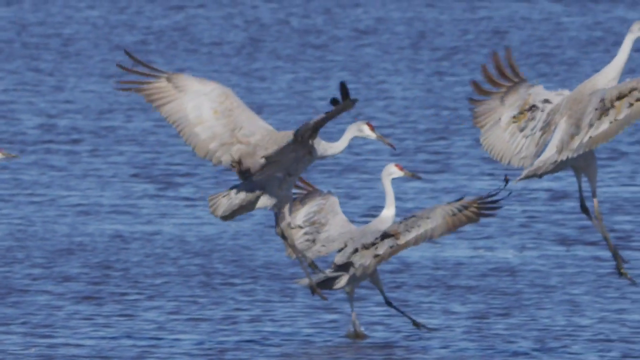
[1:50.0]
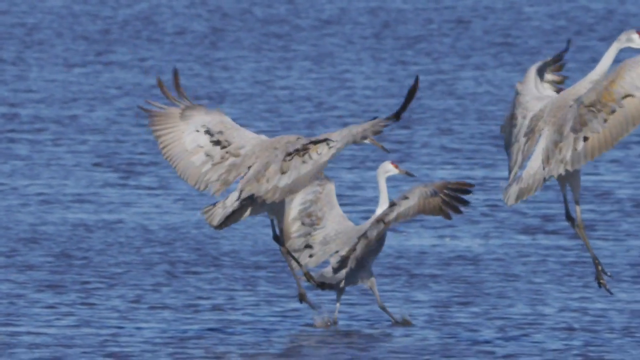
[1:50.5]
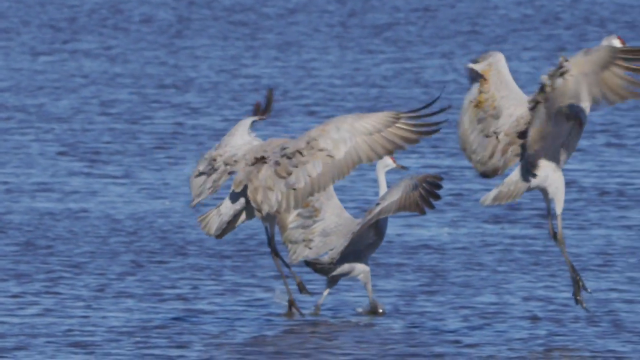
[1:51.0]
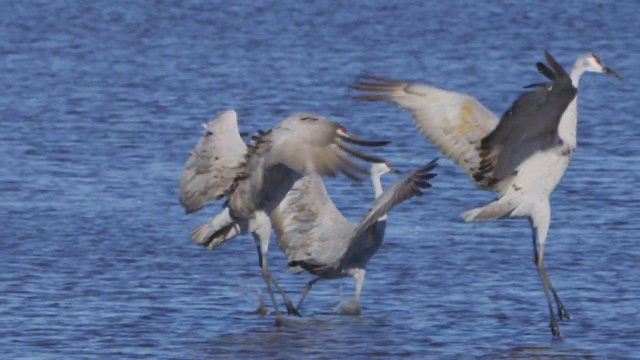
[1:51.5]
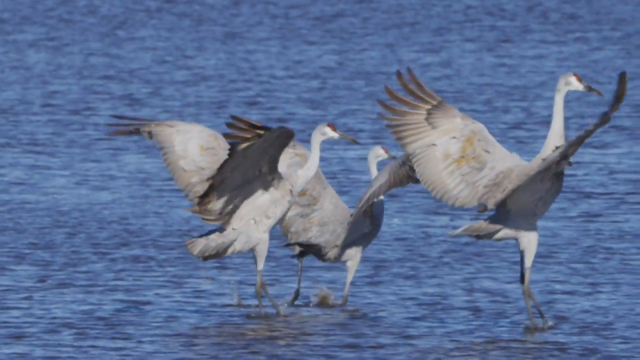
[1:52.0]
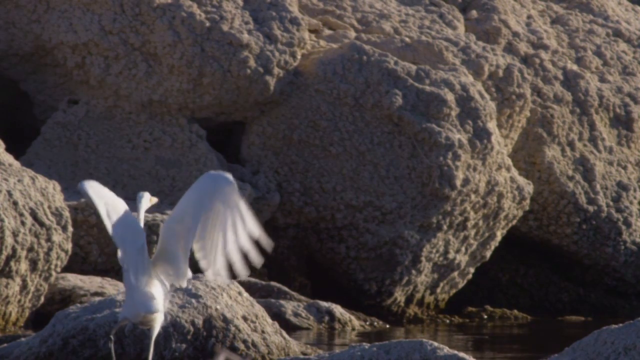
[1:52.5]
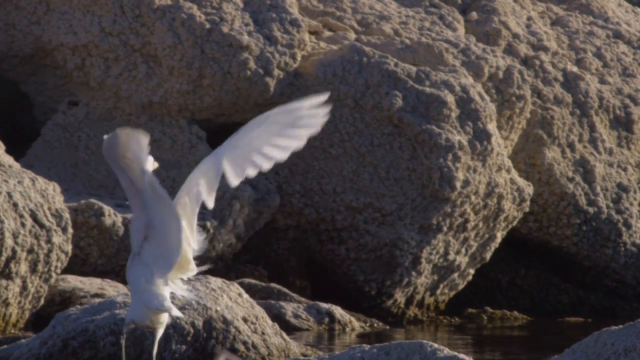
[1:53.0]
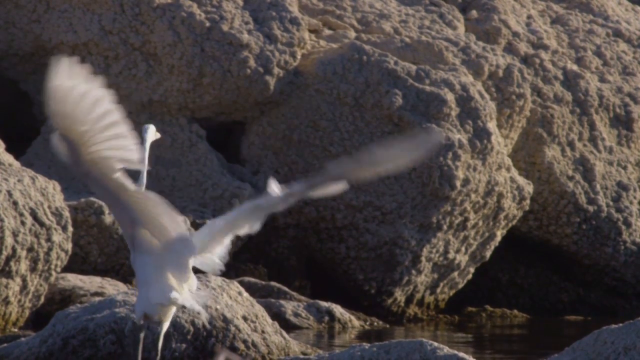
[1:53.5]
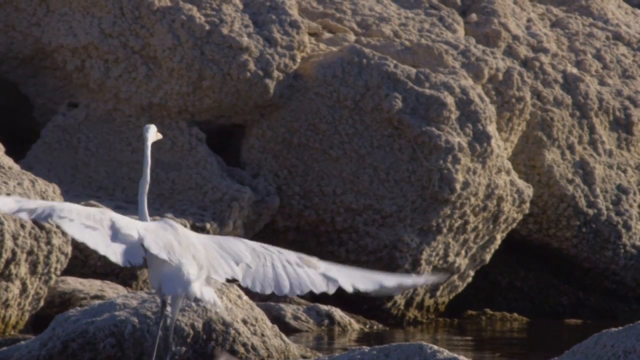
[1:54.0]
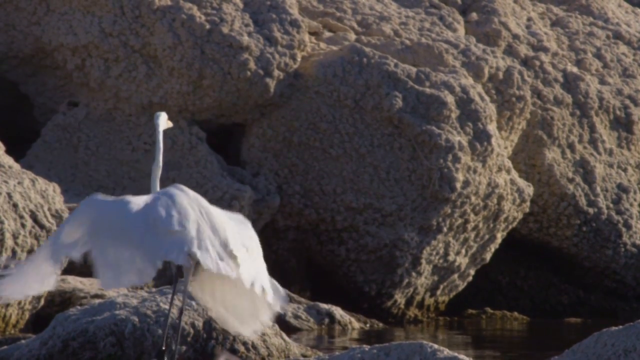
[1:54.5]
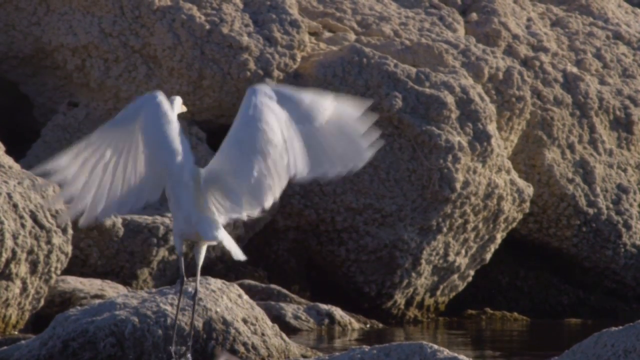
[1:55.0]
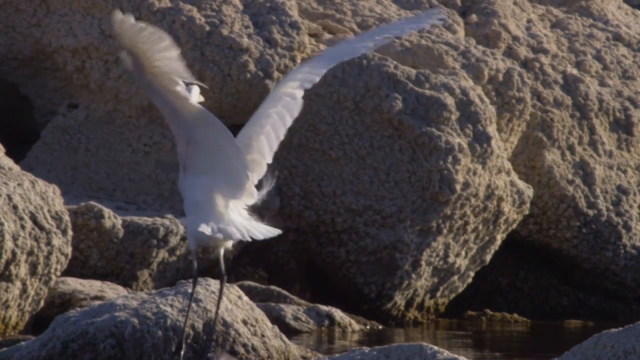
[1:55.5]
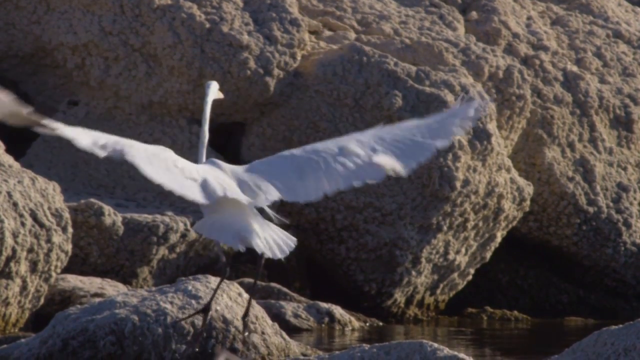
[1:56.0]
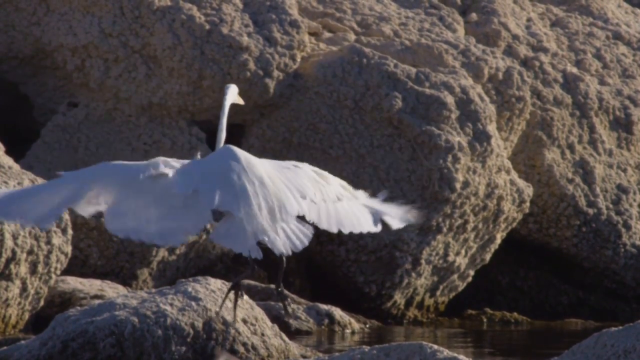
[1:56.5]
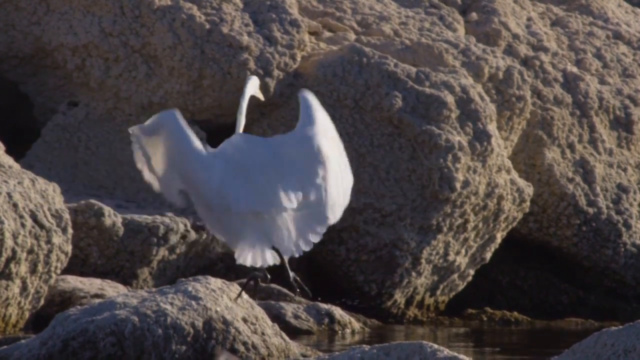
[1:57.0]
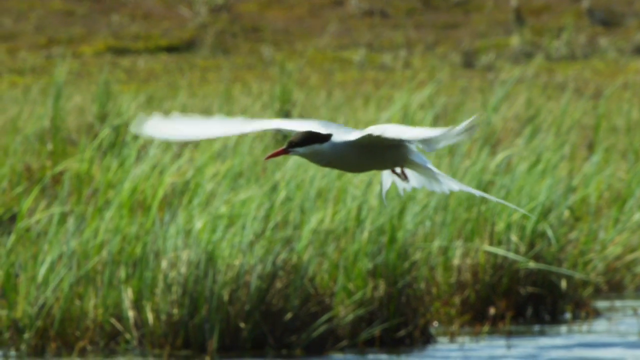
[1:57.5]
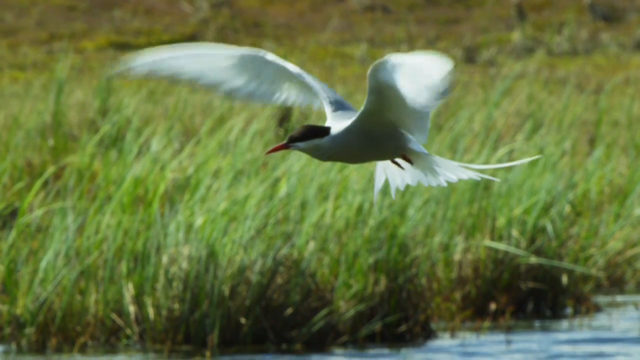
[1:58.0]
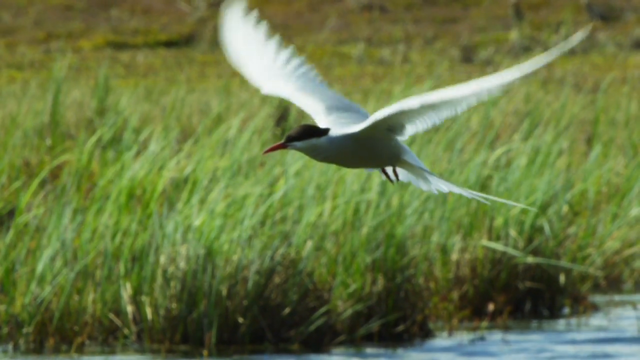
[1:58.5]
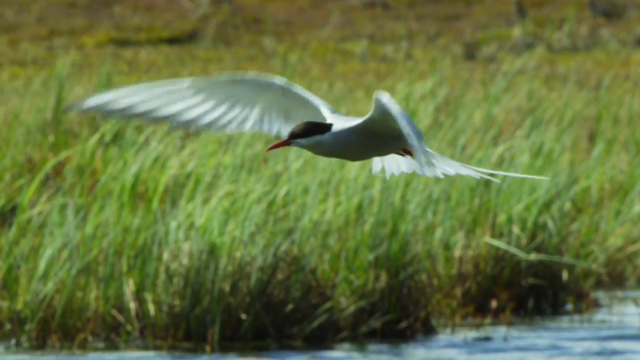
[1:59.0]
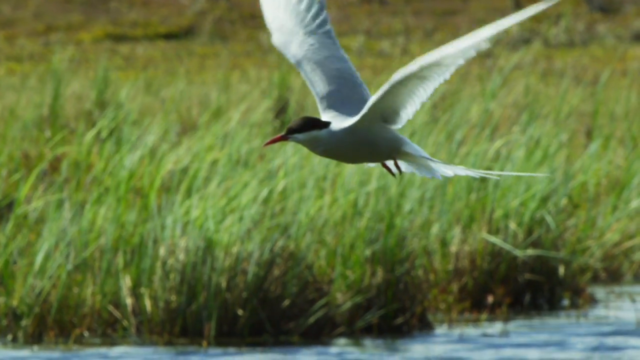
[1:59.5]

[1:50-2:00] What are apparently cranes fly over blue water near its edge and land on the edge of the water, one landing on a big rock. These birds have long necks and fairly long, dark legs, and their feet are big. A small bird seems able to fly in place. It is white with black on top of its head and a long dark beak, and it flies over water with tall grass in the background. Its kind is unidentified.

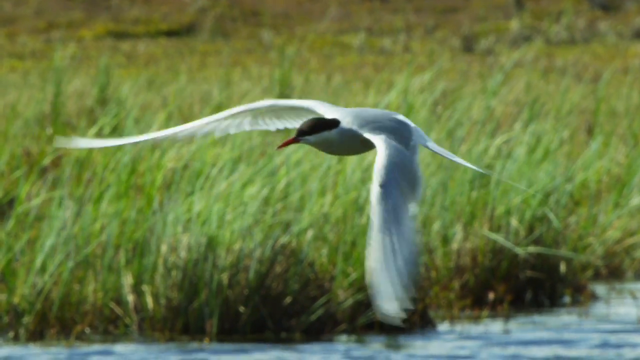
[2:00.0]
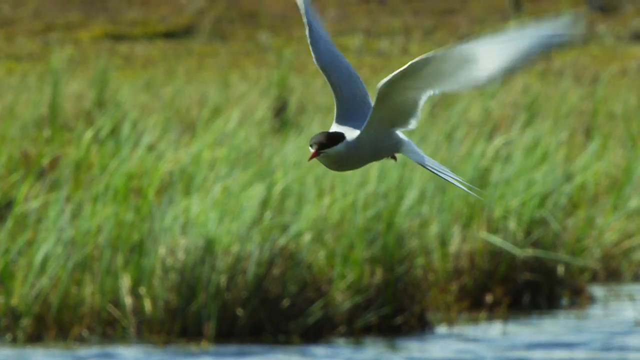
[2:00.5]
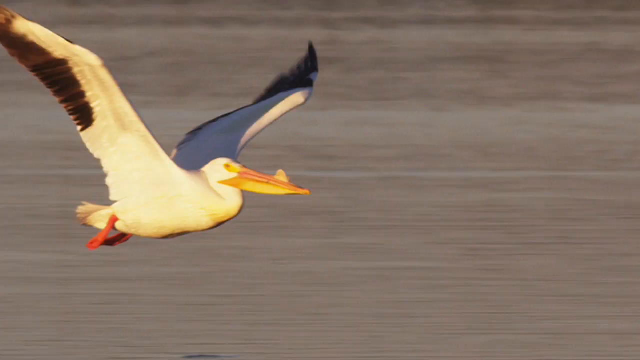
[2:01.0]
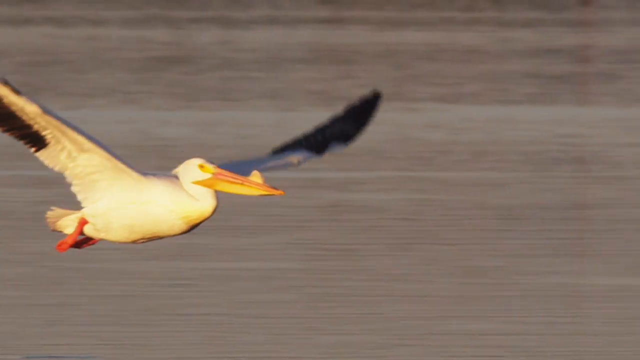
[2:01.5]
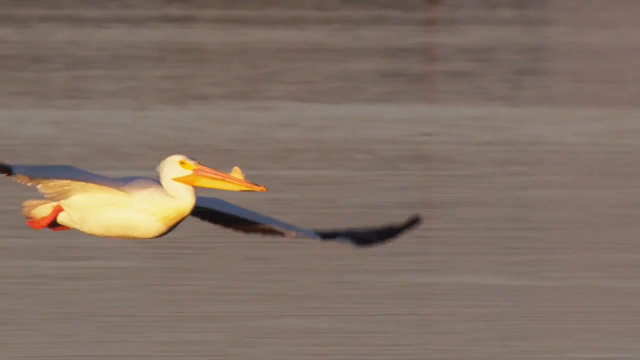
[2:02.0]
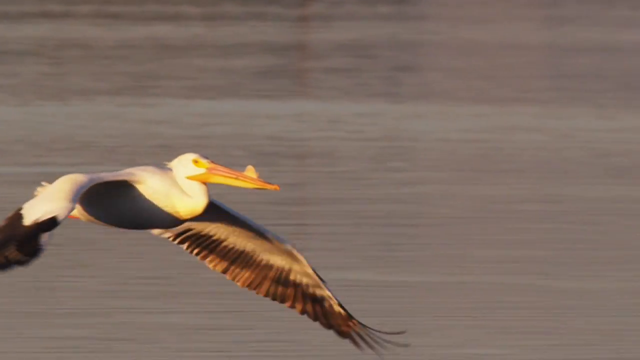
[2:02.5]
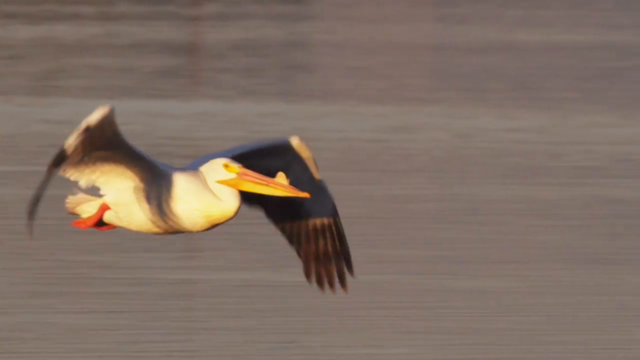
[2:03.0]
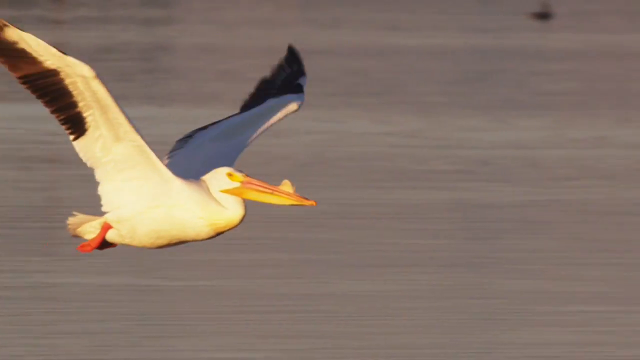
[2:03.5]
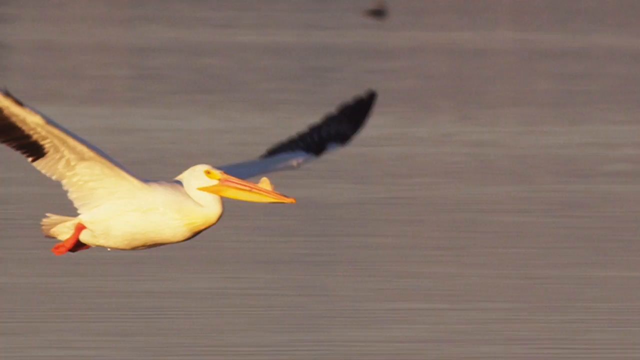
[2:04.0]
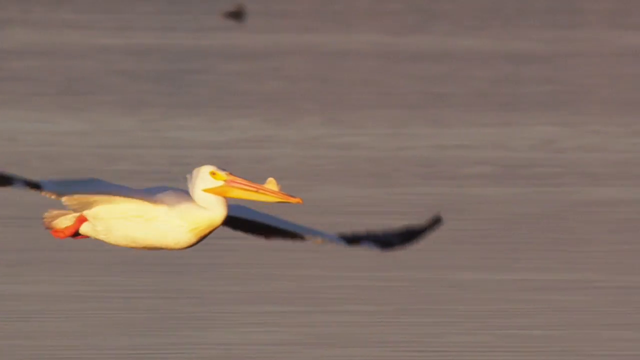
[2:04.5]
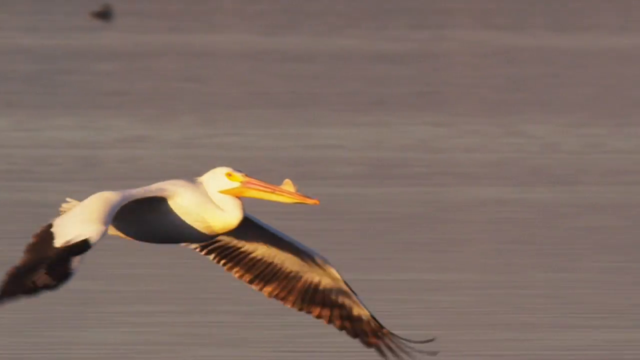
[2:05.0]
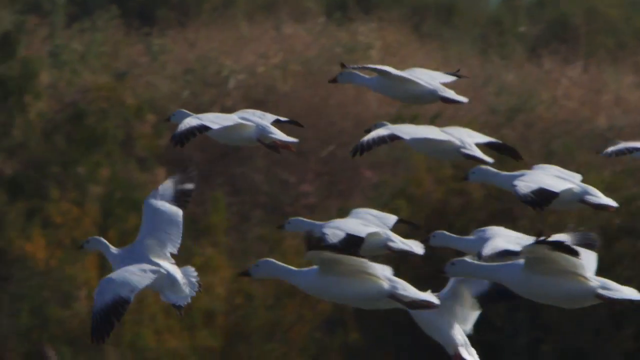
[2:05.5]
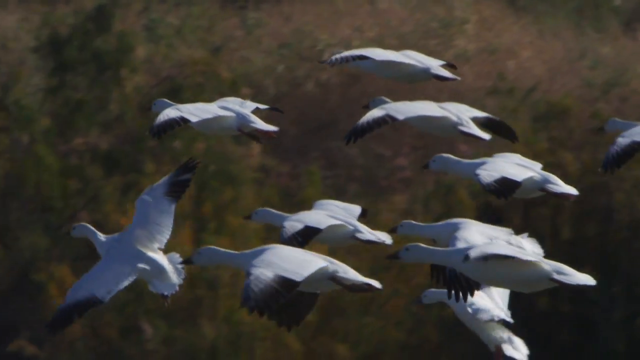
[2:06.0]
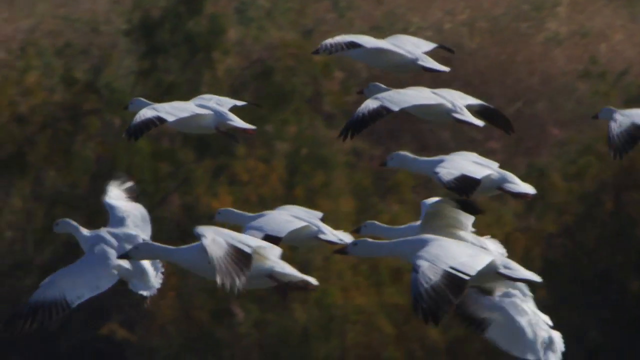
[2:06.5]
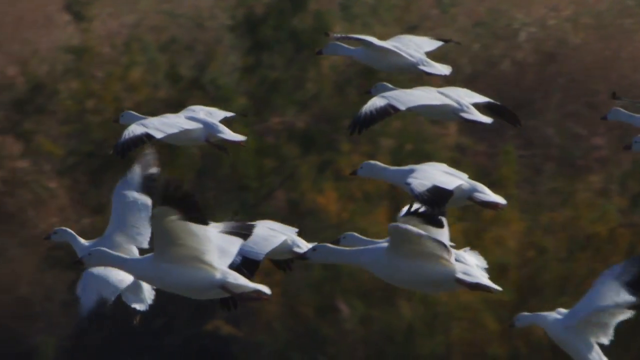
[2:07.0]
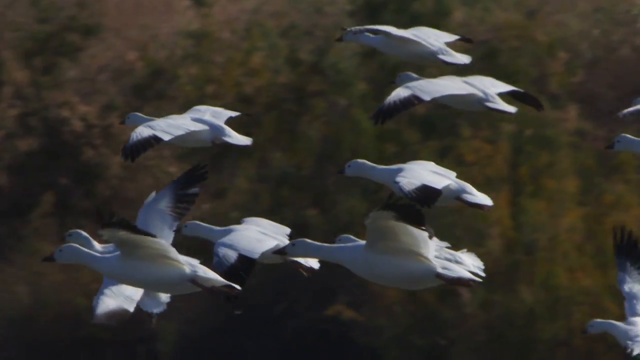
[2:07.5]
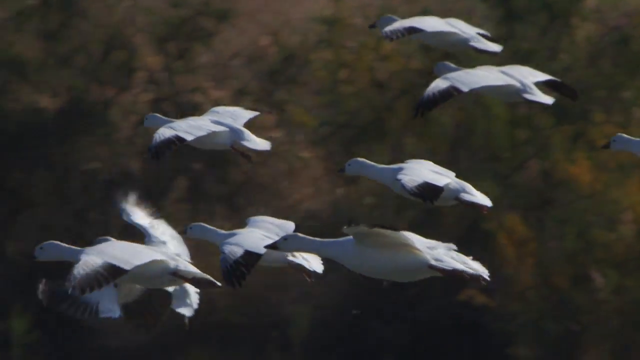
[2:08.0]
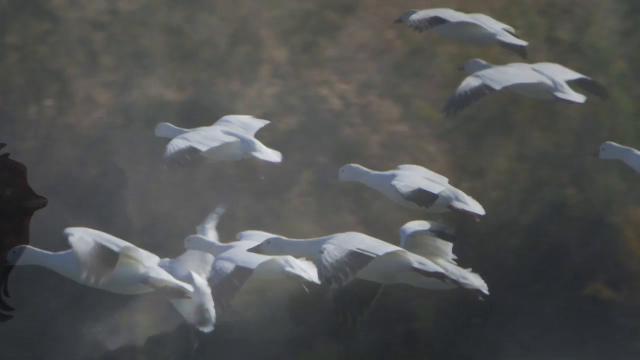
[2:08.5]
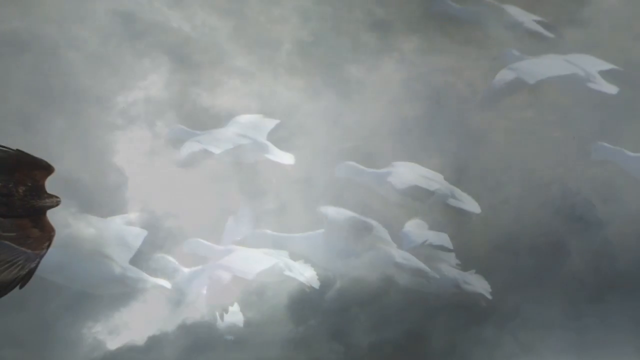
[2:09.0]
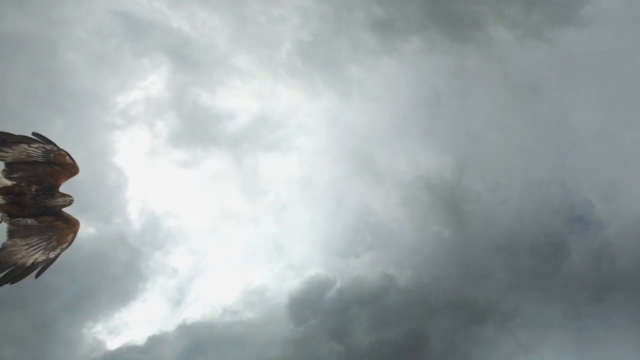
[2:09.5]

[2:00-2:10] The small bird flies in place. A pelican then flies across what is perhaps a body of water, or possibly just the sky in the background. The pelican is white with black tips only on its wings, has an orange beak with a little knot on top, and has yellowish eyes. A flock of white seagulls with black wing tips flies together. Right at the end, a big bird, perhaps an eagle or the vulture, flies.